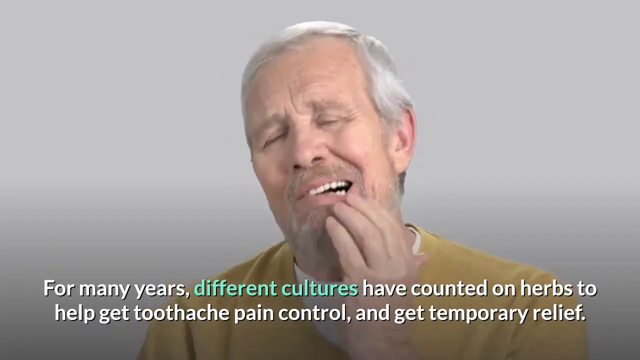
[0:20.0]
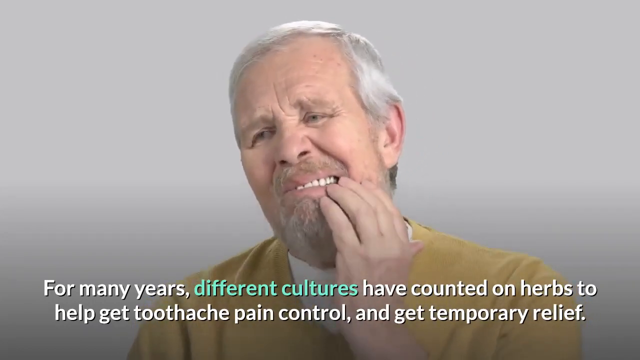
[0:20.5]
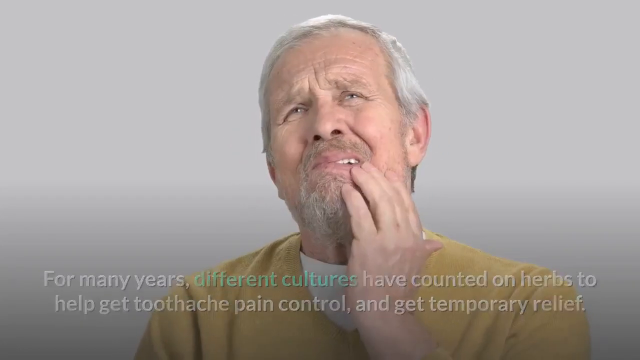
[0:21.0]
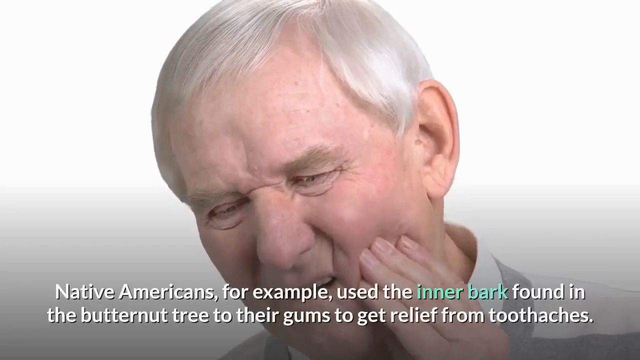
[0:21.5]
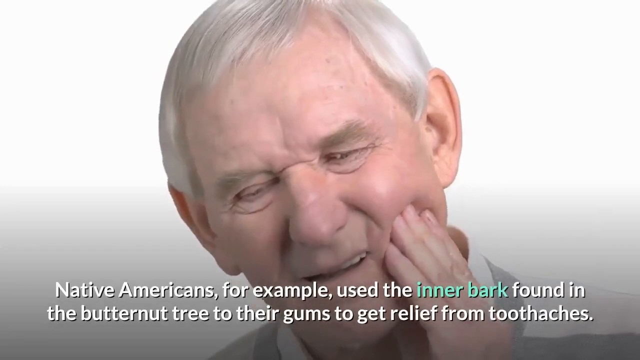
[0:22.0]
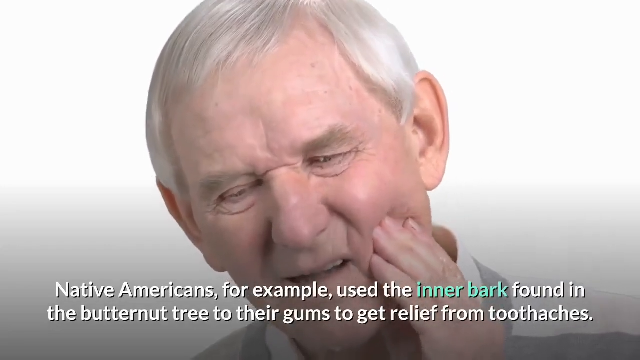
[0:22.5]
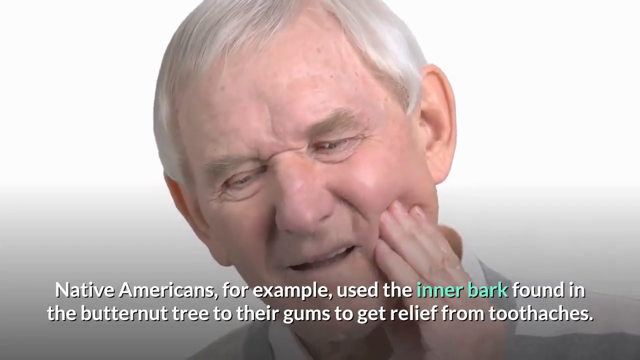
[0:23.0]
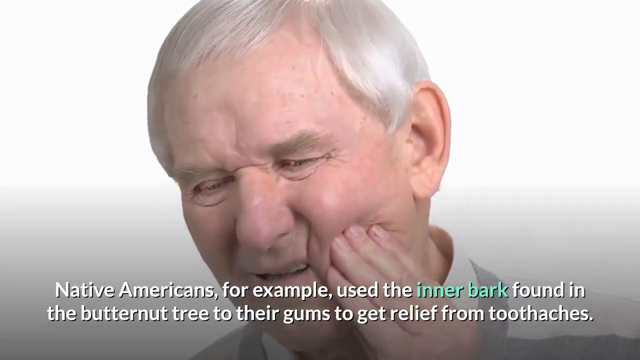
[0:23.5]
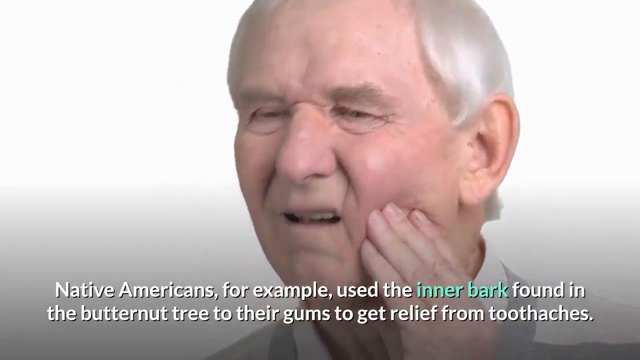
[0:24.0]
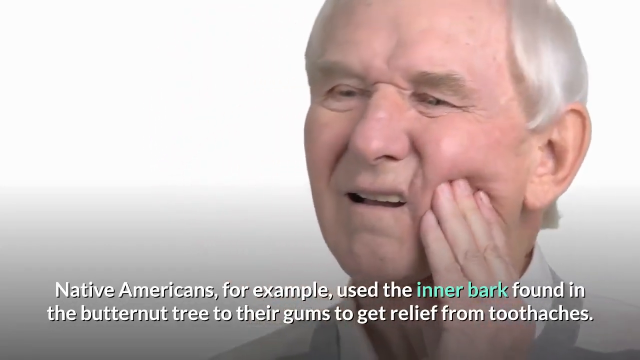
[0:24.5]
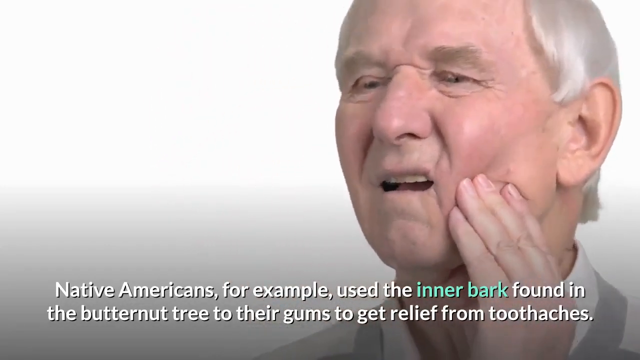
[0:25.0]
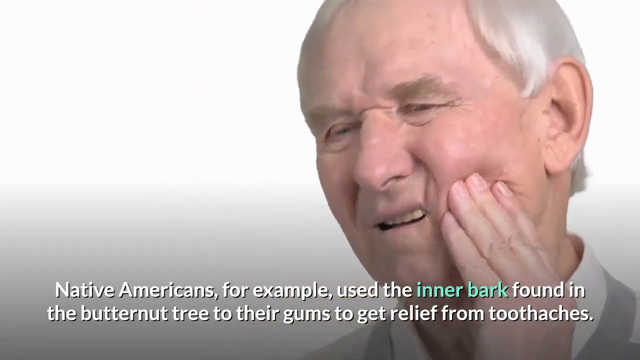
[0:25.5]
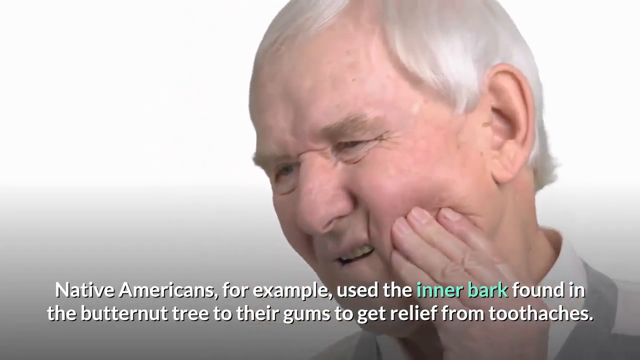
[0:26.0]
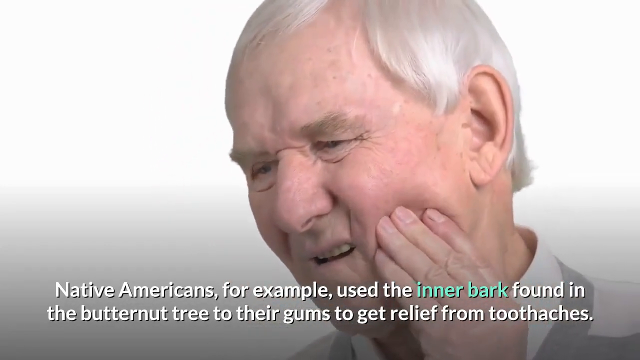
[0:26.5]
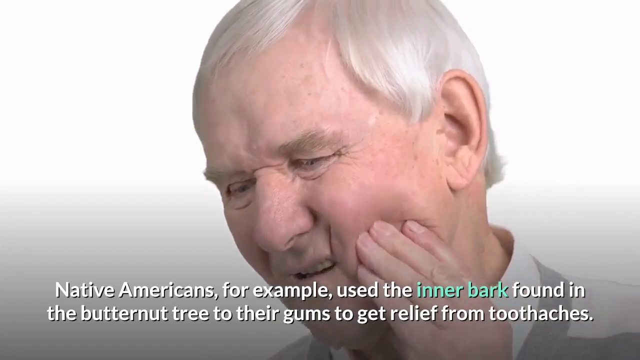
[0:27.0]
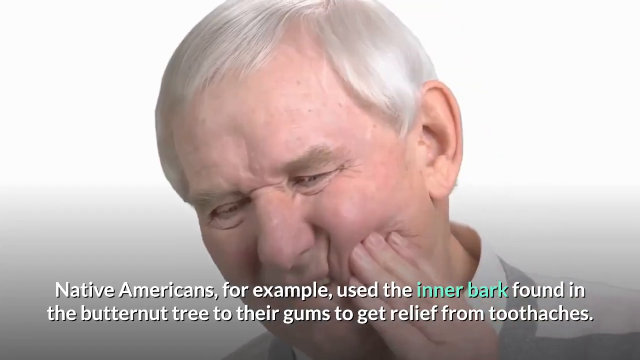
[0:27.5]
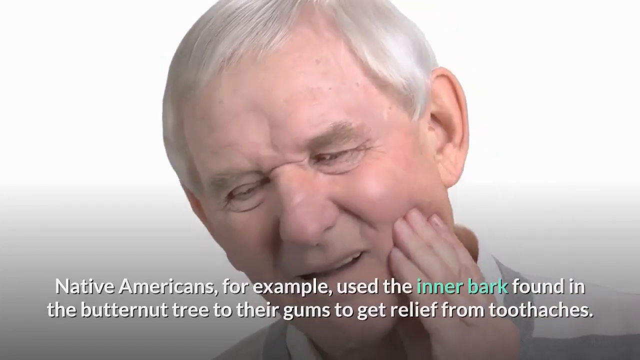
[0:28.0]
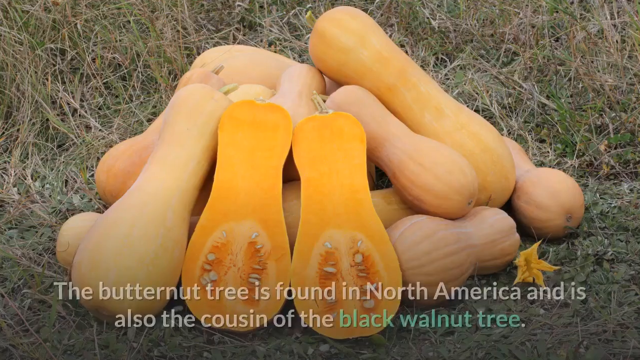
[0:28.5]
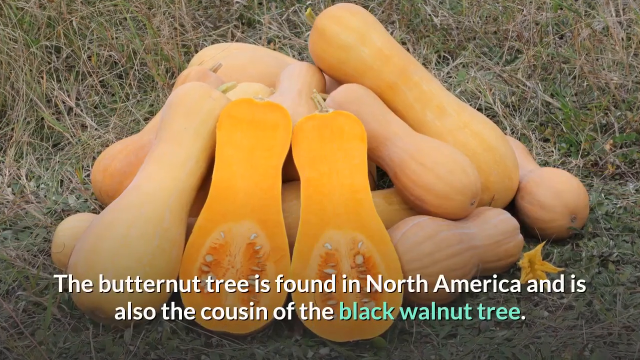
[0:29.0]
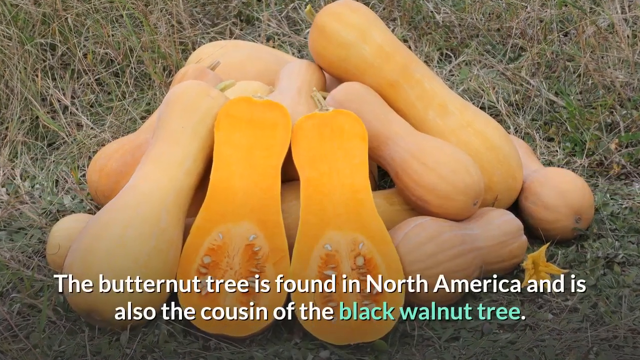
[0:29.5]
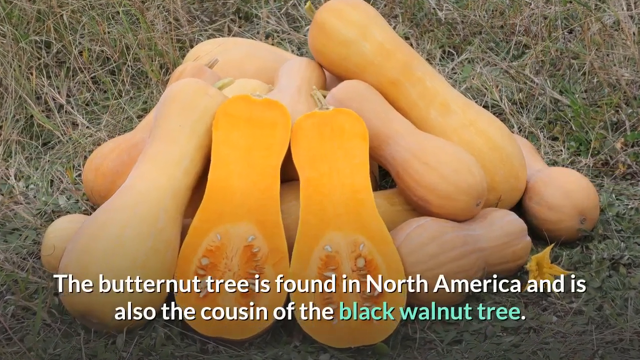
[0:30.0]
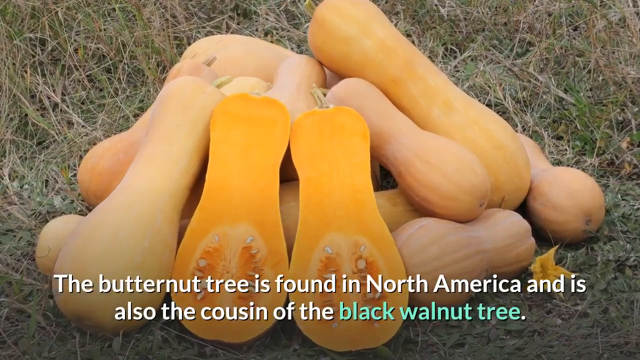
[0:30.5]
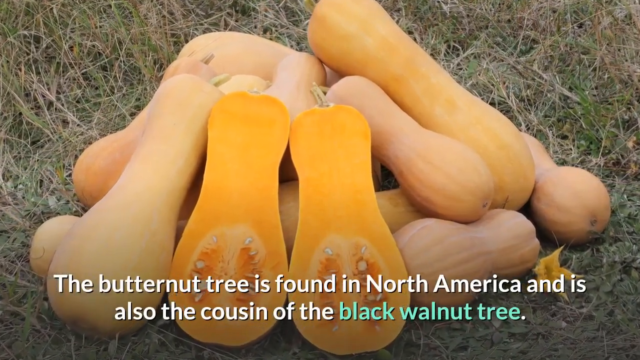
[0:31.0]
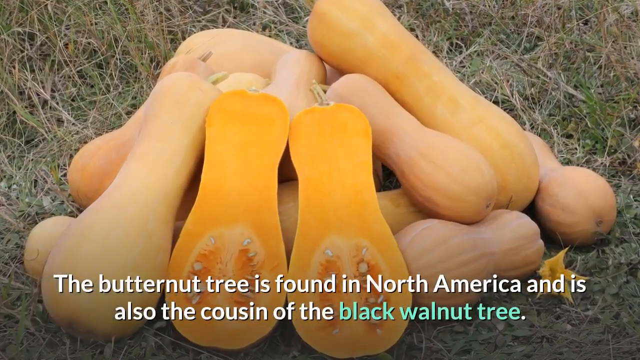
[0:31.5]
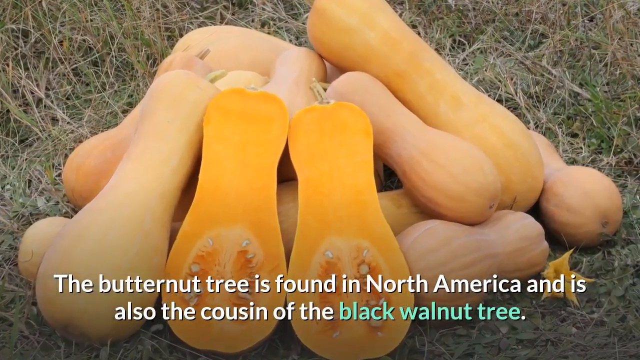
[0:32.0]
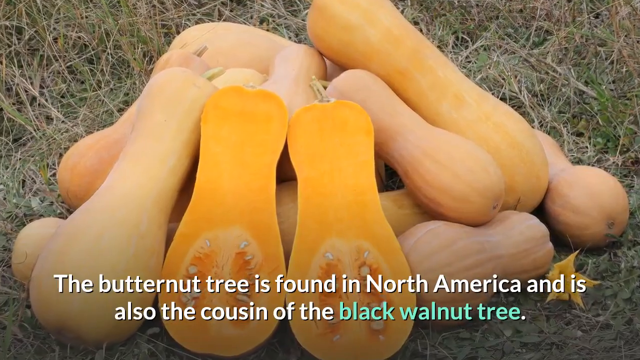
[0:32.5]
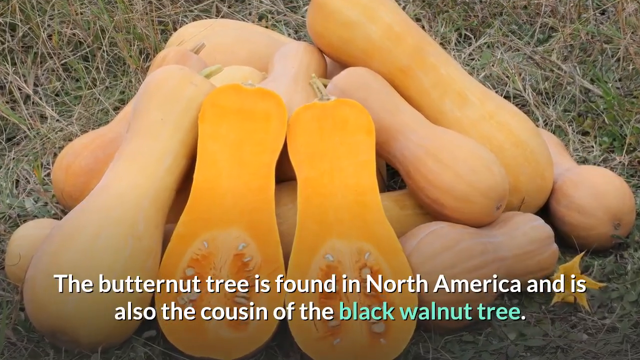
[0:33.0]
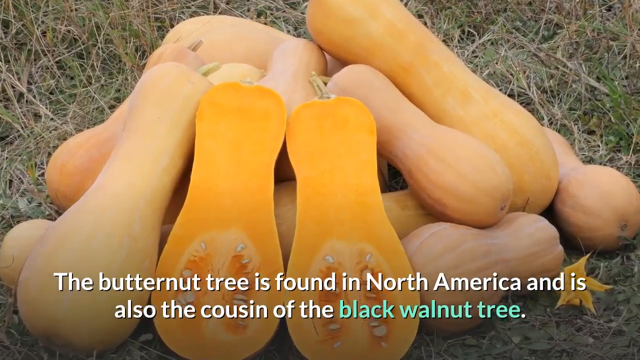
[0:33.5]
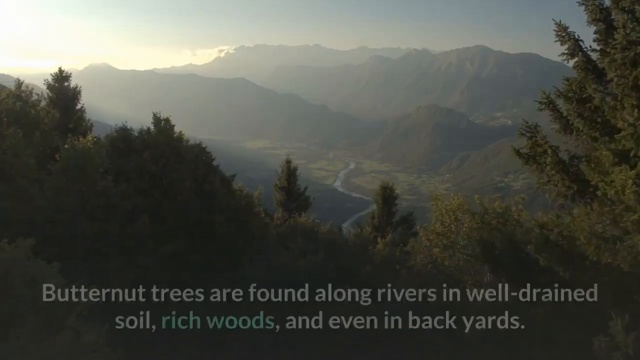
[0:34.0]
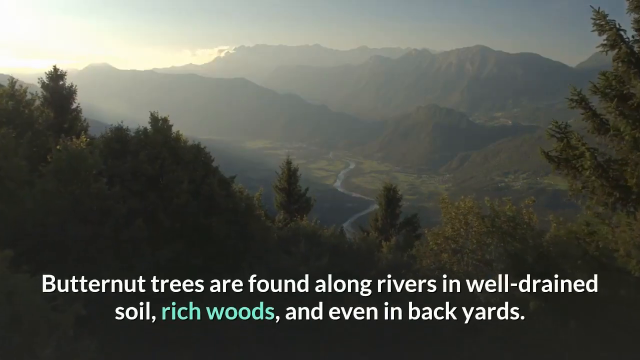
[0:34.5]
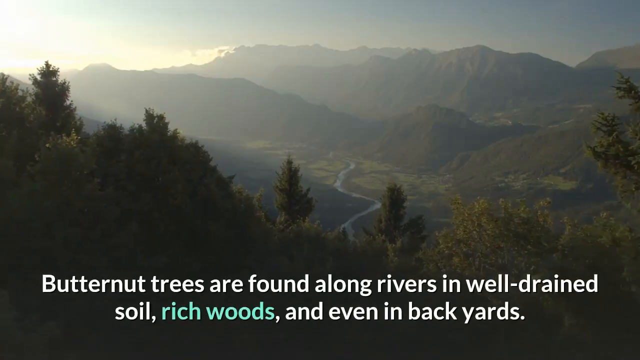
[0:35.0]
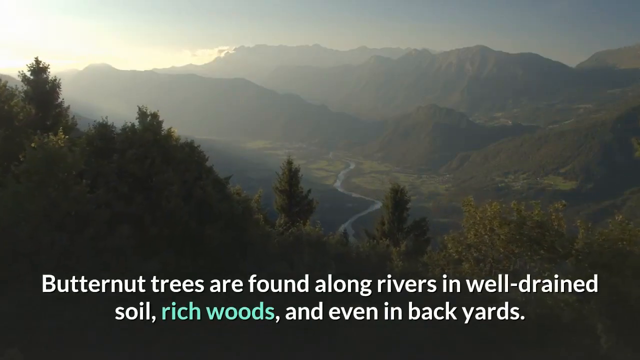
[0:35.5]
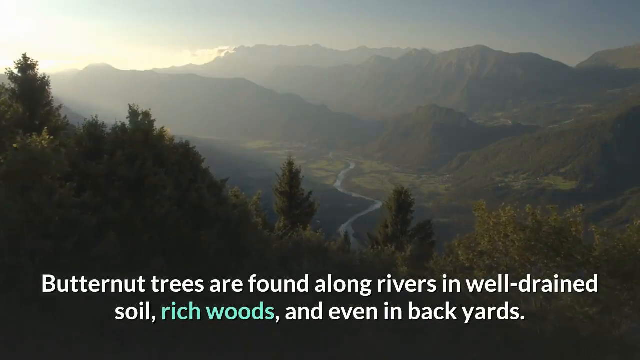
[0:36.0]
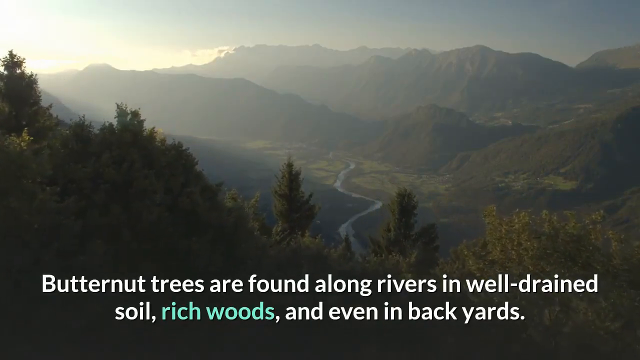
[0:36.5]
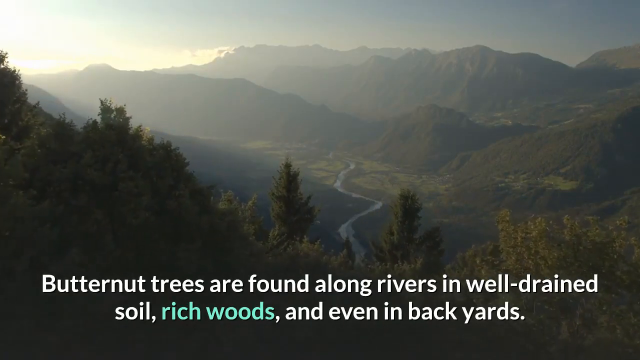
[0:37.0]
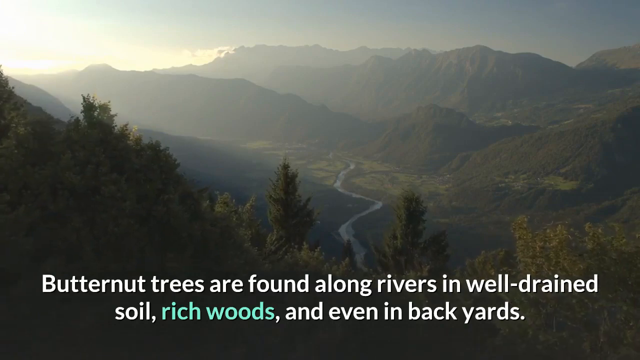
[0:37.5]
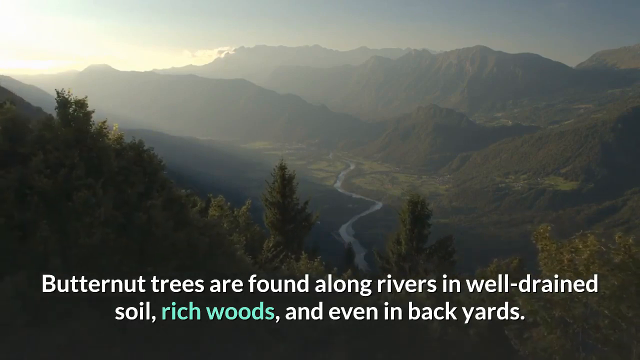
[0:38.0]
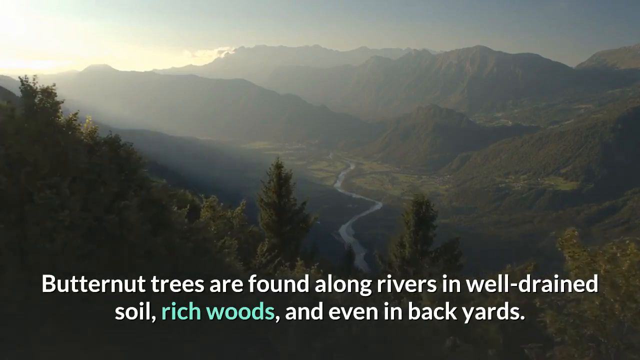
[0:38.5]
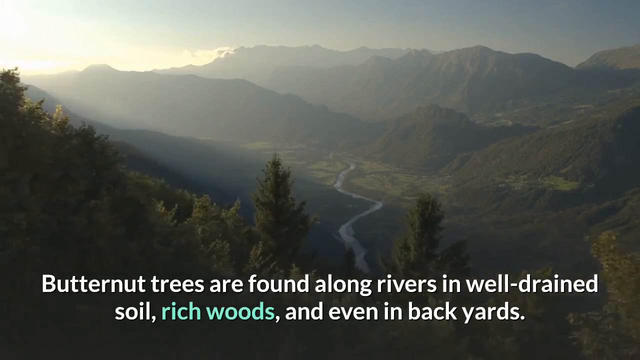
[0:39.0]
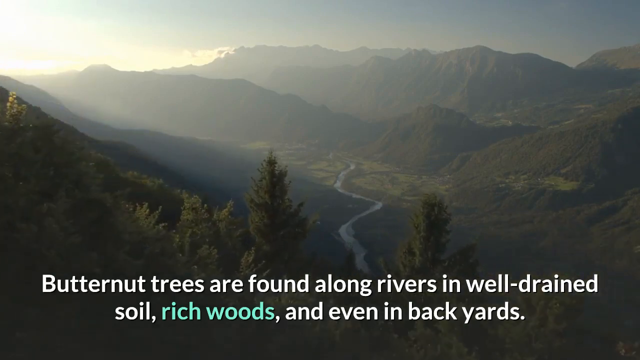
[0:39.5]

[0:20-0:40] The white-haired man with a white and gray goatee squints in pain and moves his mouth all around, his left hand touching his left lower lip. The scene changes to a different white-haired man in a white collared shirt. His head is bent slightly forward, his eyes are squinted, and his left hand is on his left cheek, pushing inward. Text at the bottom of the screen reads "Native Americans, for example, used the inner bark found in the butternut tree to their gums to get relief from toothaches." He rubs his left cheek in a circular motion. Next is an image of butternut squash piled on the grass, with two halves standing neatly leaned on the pile at the very front; the text reads "the butternut tree is found in North America and is also the cousin of the black walnut tree." Then an image shows mountains, trees and a river under a cloudy sky, with everything looking kind of hazy. The text reads "butternut trees are found along rivers, in well-drained soil, rich woods, and even in backyards."